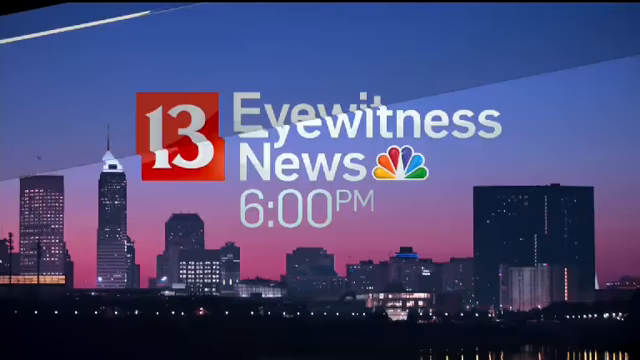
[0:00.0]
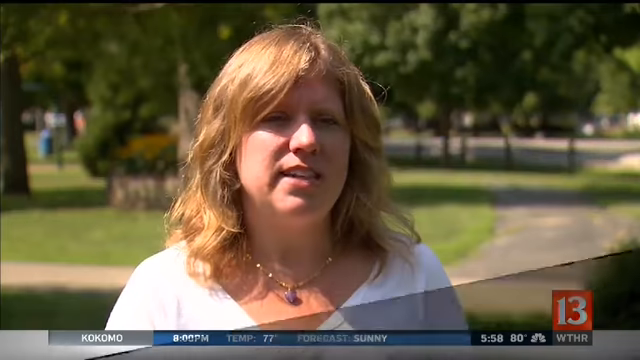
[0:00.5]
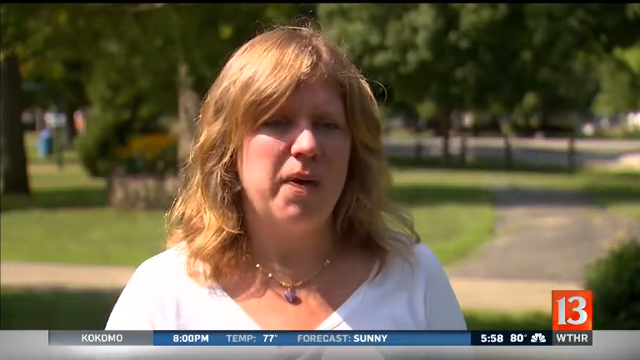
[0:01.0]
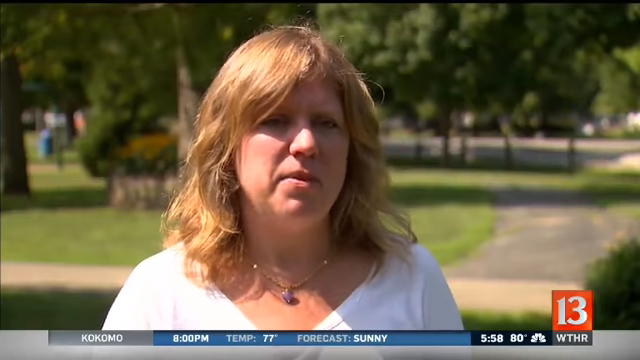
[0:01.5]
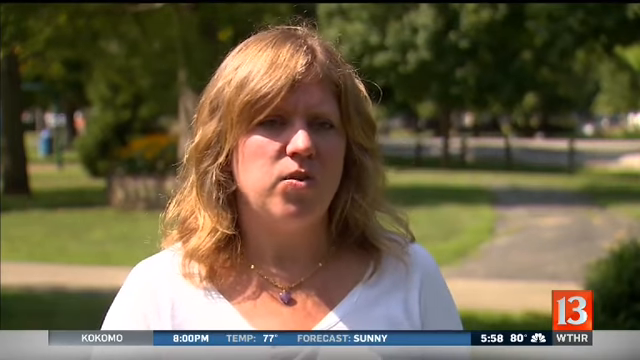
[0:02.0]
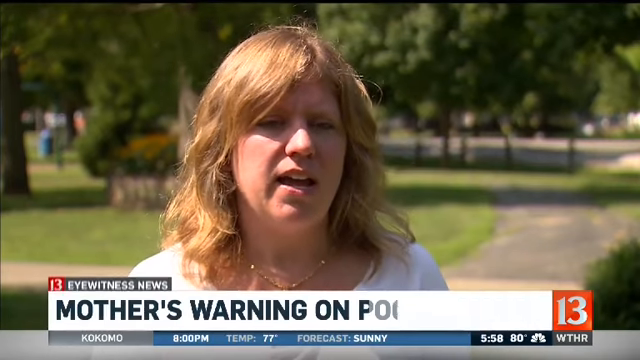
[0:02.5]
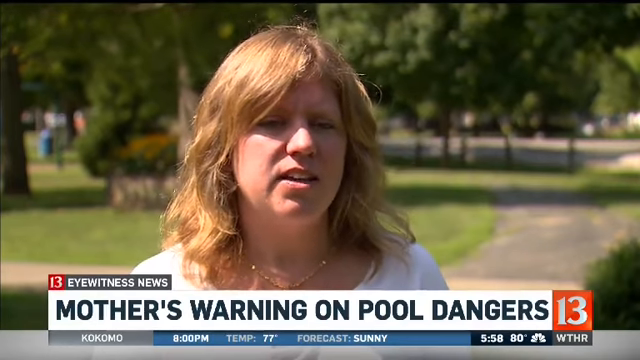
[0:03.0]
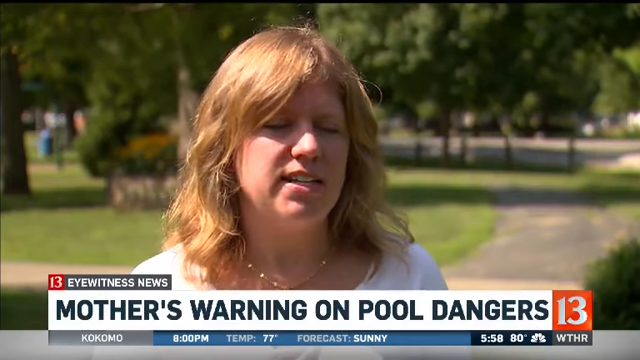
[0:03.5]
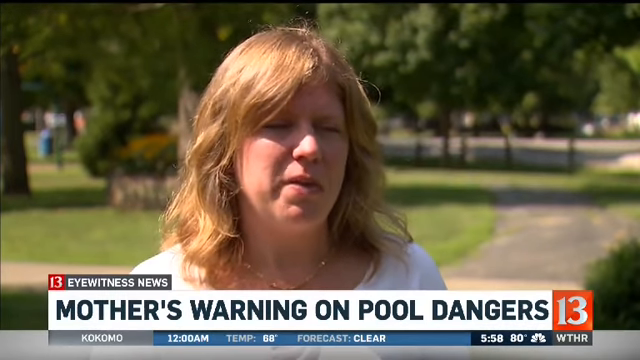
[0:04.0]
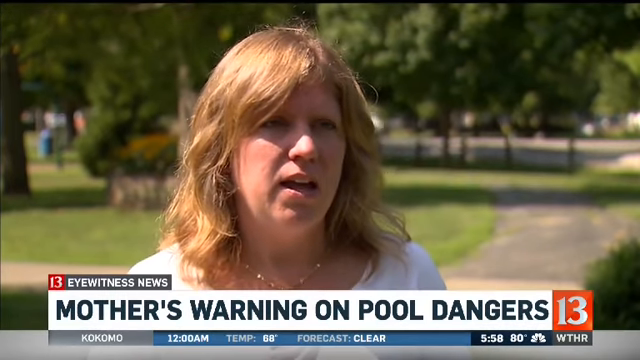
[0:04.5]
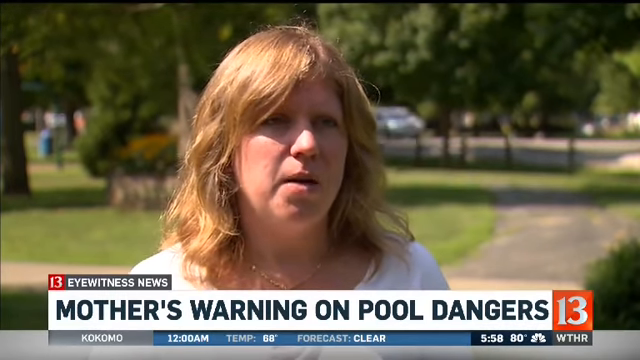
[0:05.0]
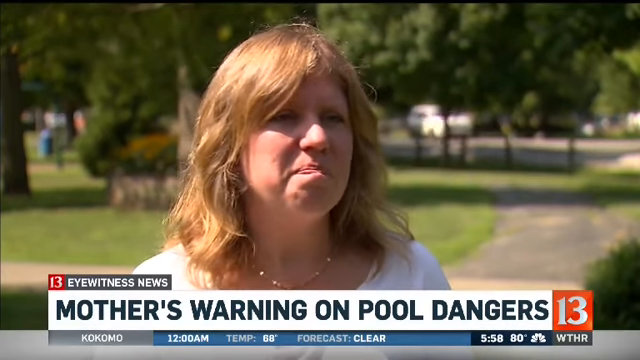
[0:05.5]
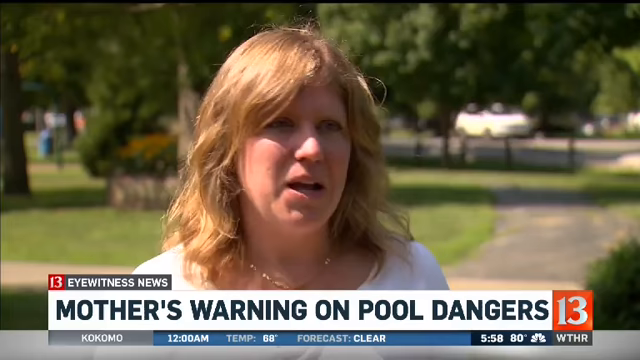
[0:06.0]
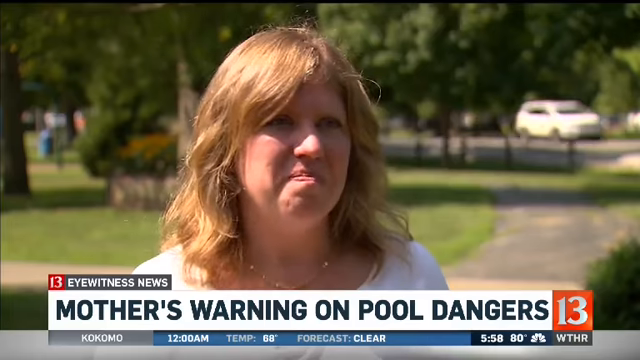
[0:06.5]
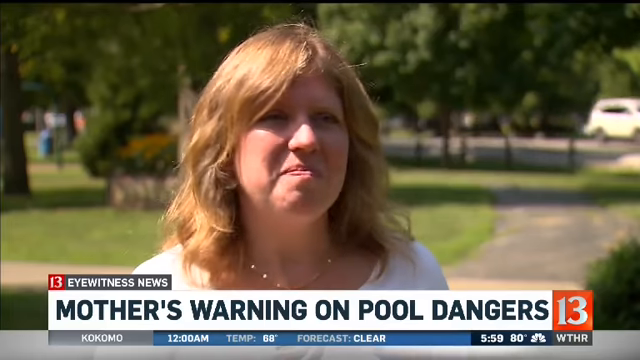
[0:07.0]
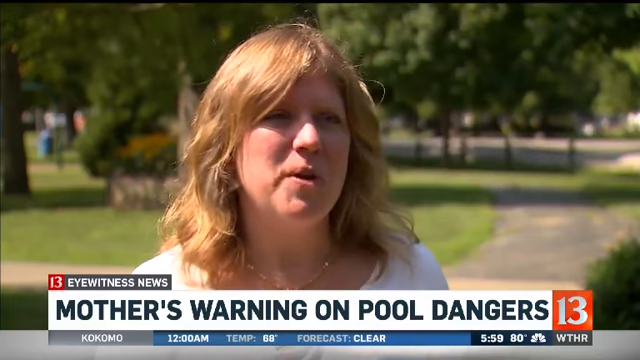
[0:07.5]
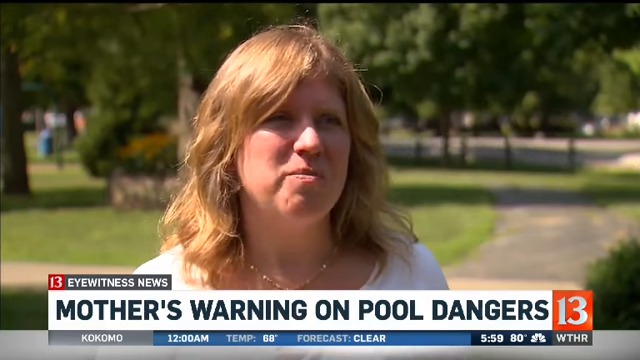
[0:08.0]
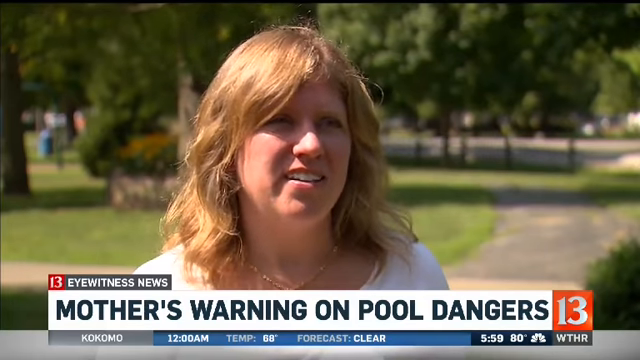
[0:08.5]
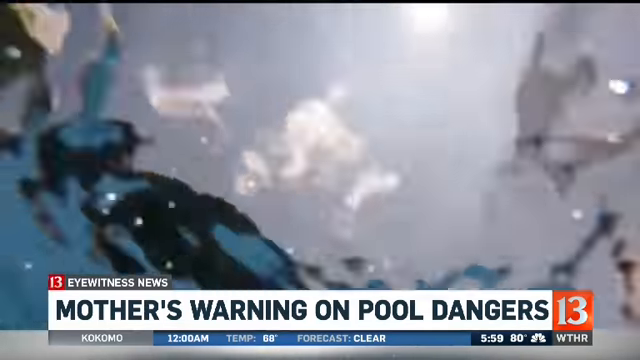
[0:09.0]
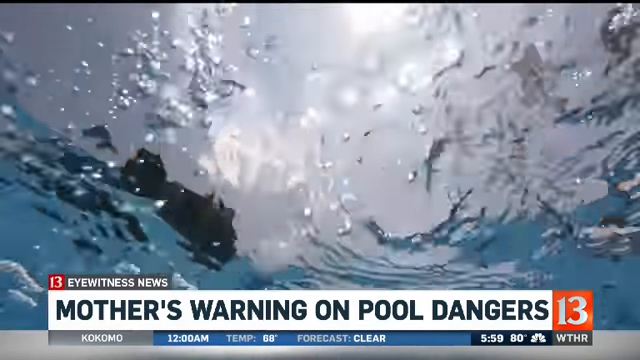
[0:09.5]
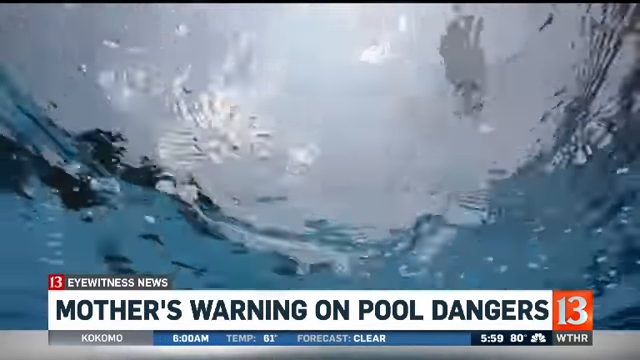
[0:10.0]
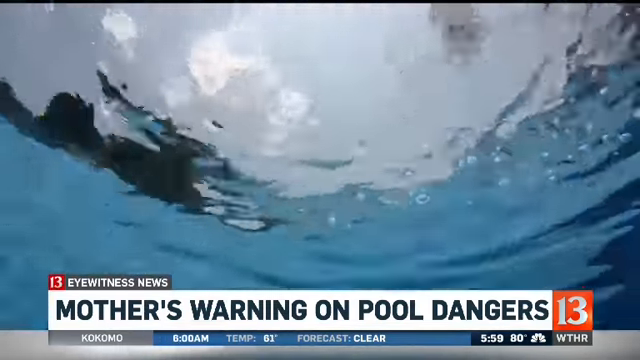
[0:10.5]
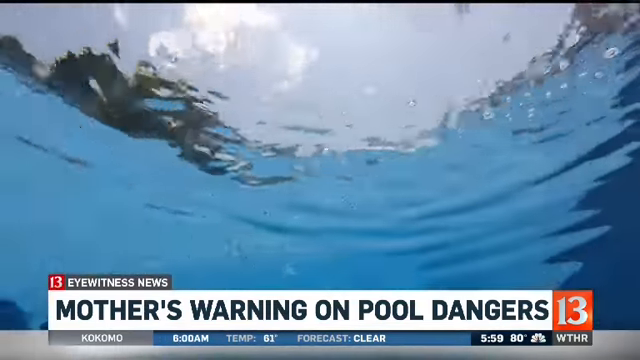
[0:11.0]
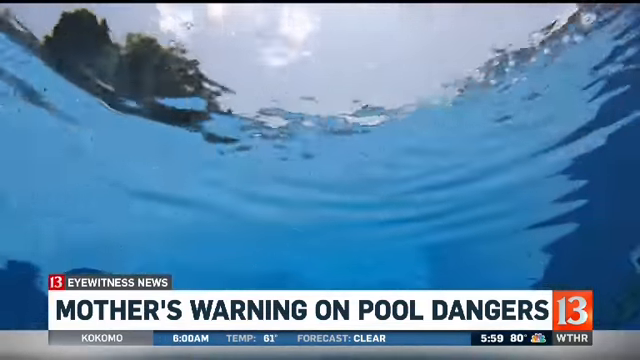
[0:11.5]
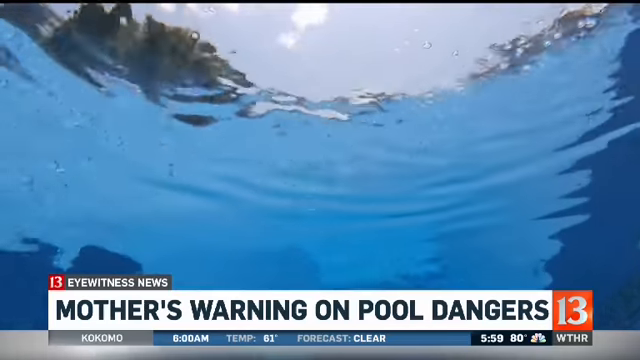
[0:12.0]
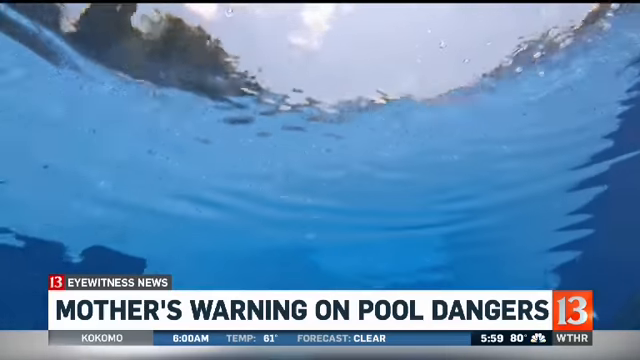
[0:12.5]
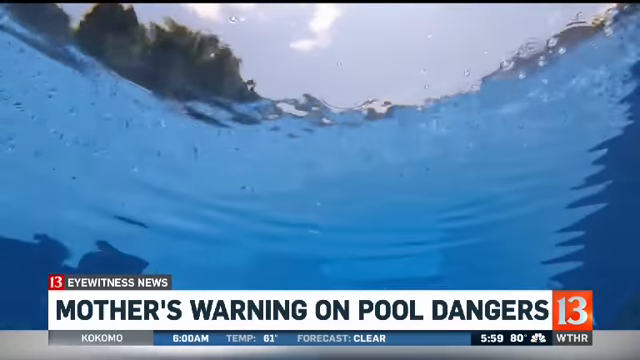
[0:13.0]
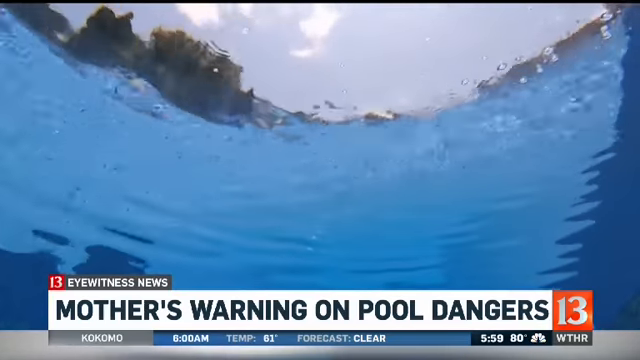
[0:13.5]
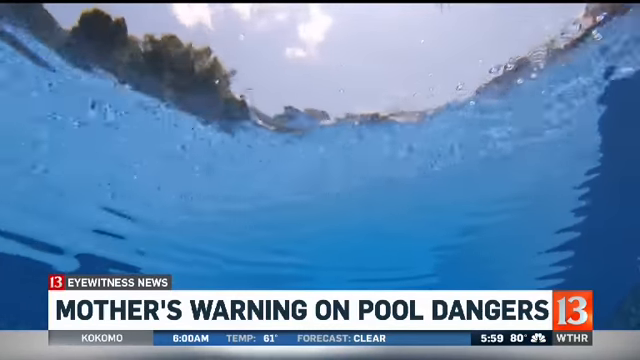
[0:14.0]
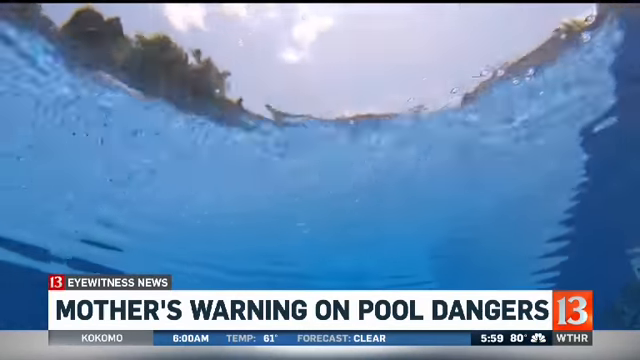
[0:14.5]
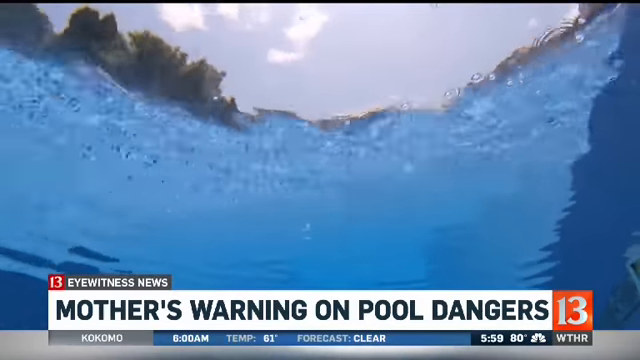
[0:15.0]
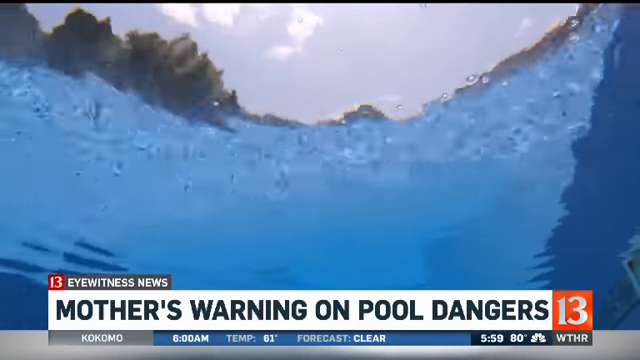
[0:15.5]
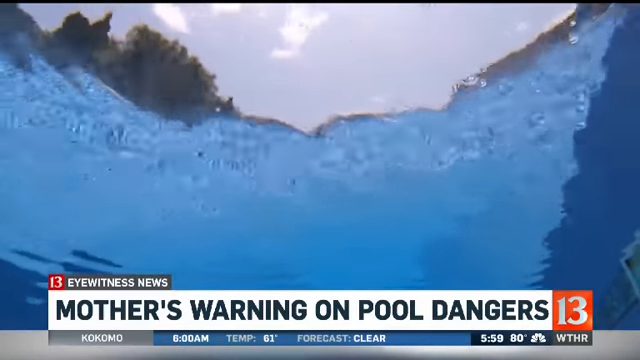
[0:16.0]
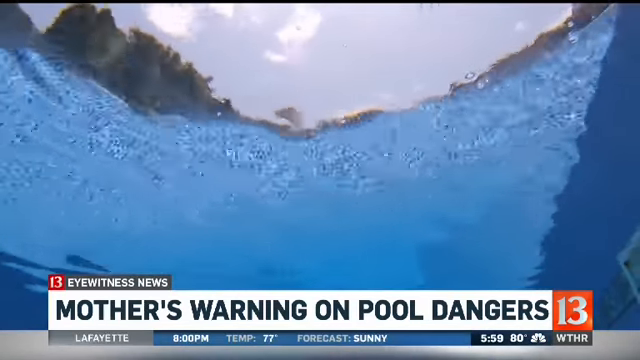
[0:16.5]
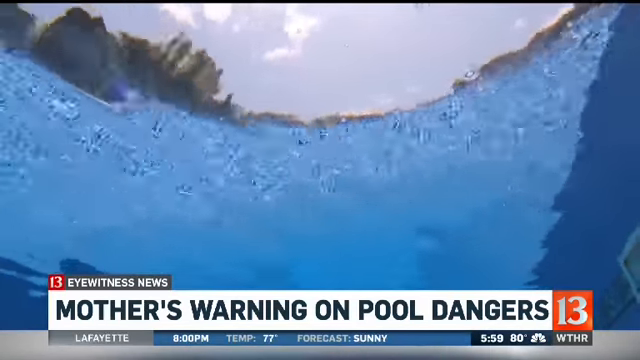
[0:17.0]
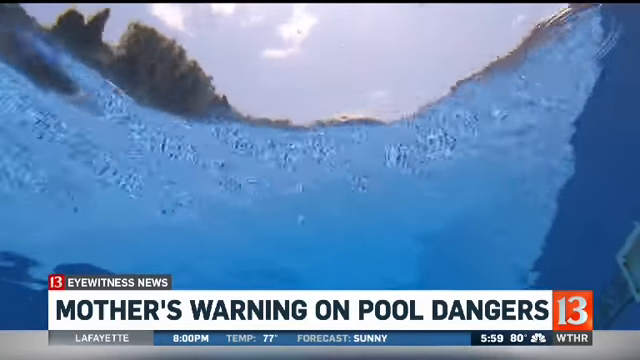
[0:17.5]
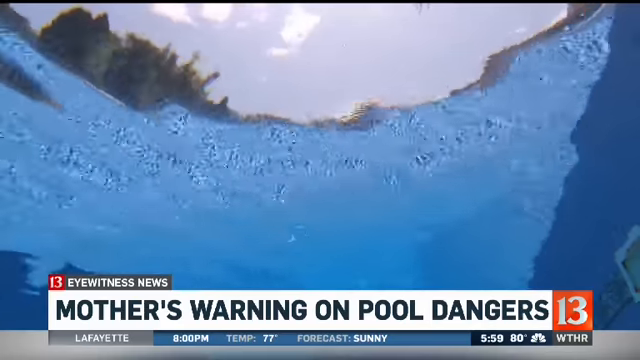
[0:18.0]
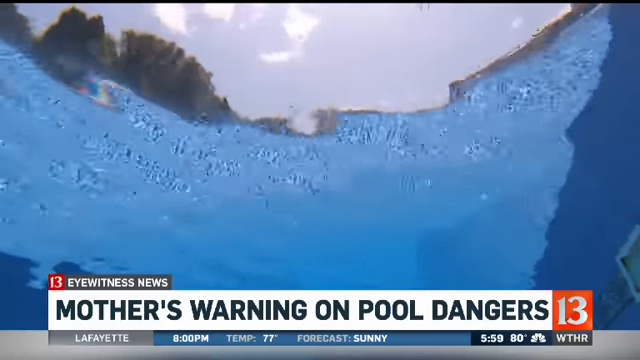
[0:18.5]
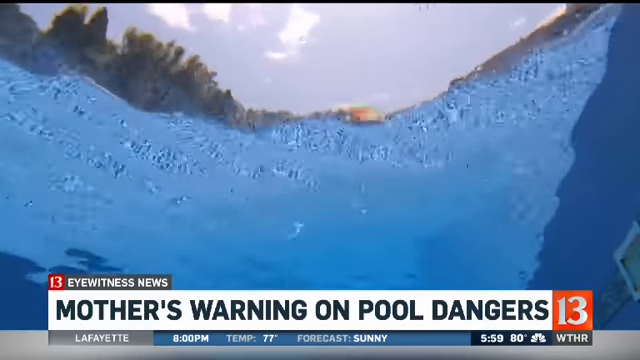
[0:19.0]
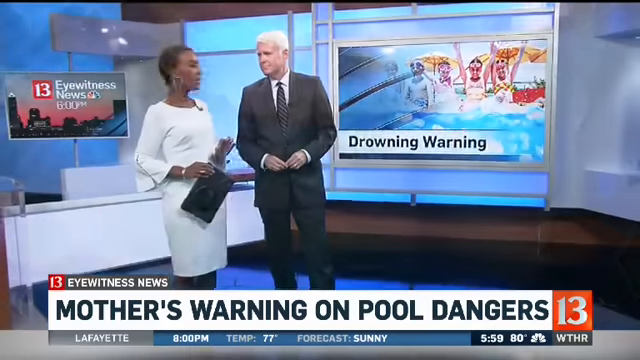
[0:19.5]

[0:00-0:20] On-screen text reads "eyewitness news channel 13 6 PM." A blonde-haired woman appears on screen with the text "eyewitness news mother's warning on pool dangers." There is a lot of green grass and trees. Then a pool appears, followed by what looks to be a view from underneath the water, looking up. Just before the shot ends, two news anchors appear in a newsroom with the text "drowning warning."